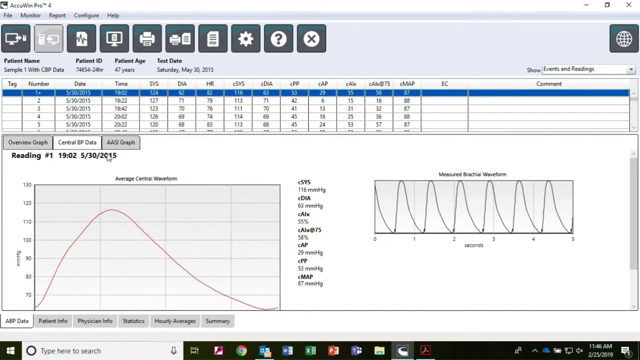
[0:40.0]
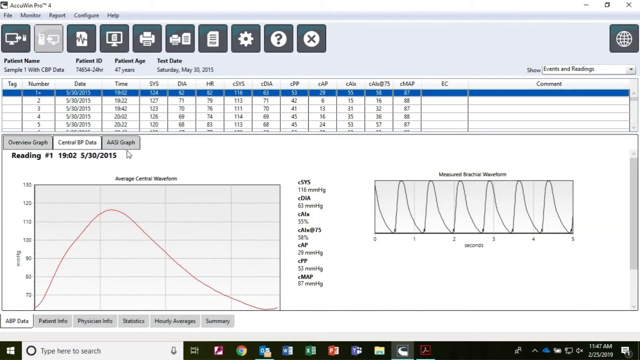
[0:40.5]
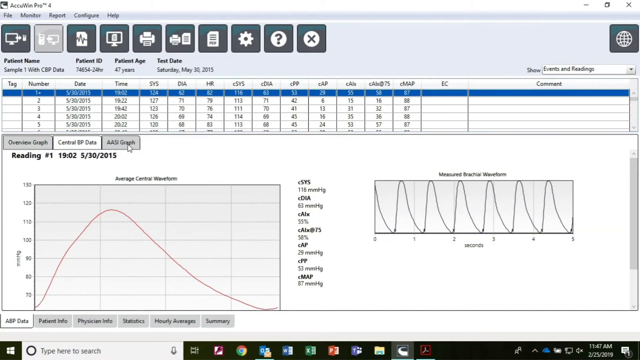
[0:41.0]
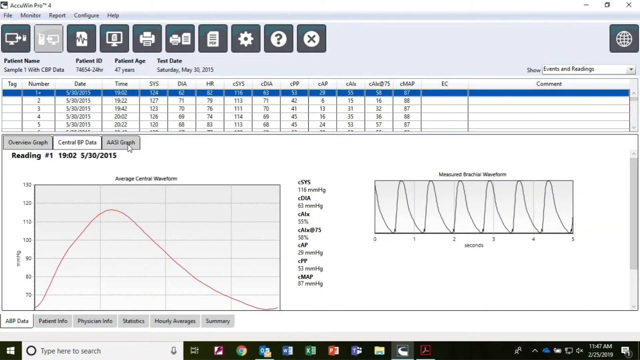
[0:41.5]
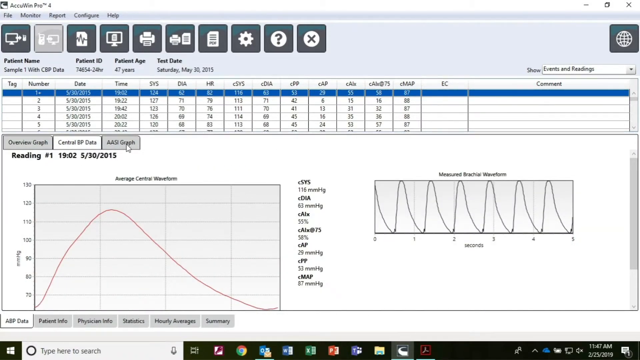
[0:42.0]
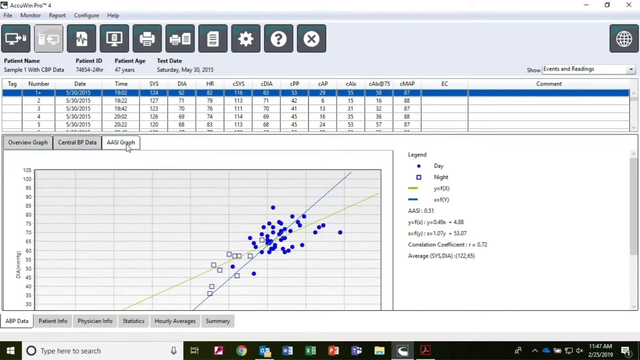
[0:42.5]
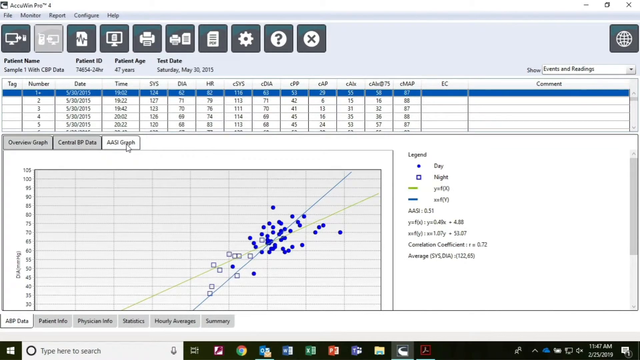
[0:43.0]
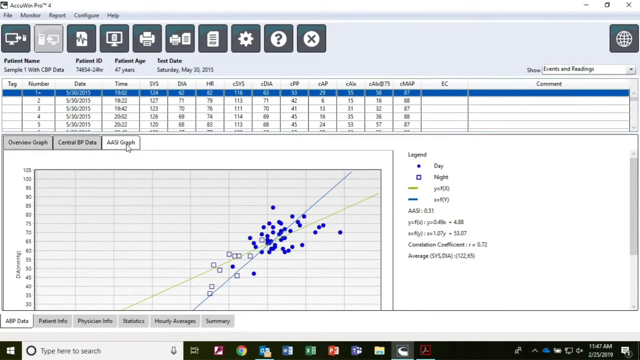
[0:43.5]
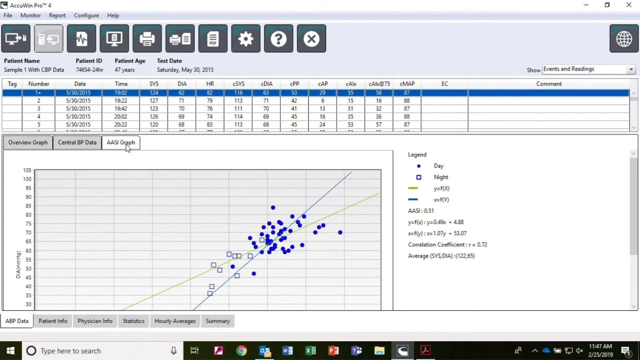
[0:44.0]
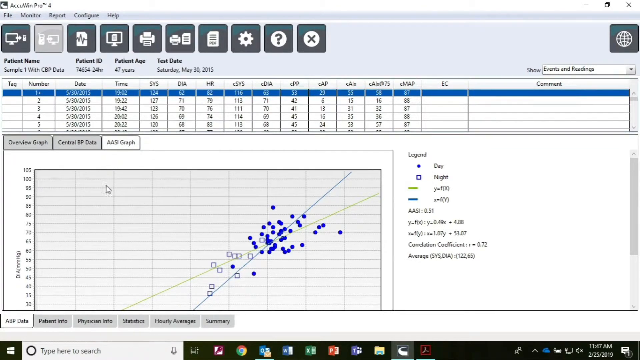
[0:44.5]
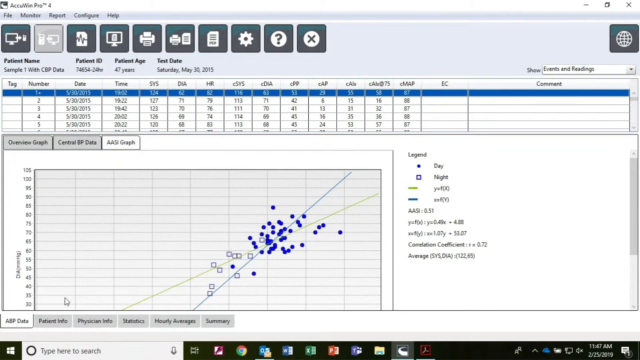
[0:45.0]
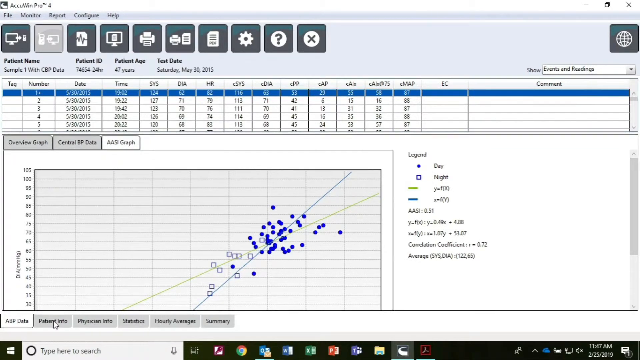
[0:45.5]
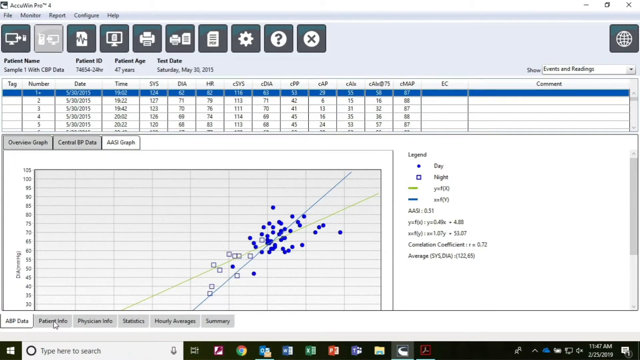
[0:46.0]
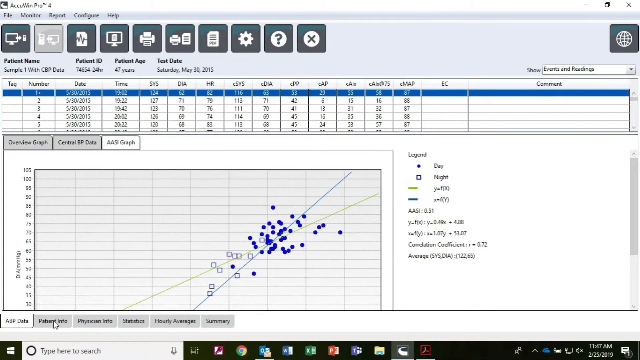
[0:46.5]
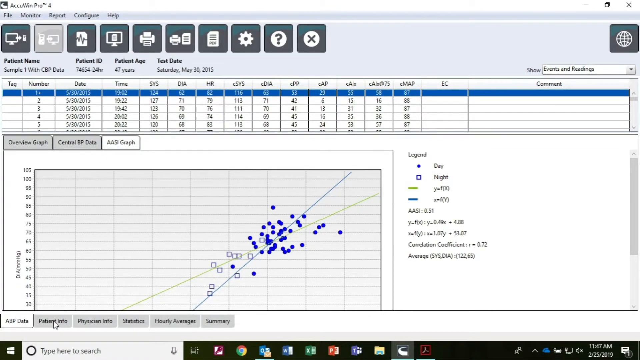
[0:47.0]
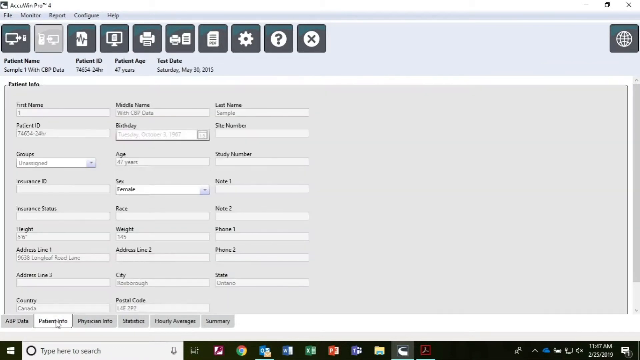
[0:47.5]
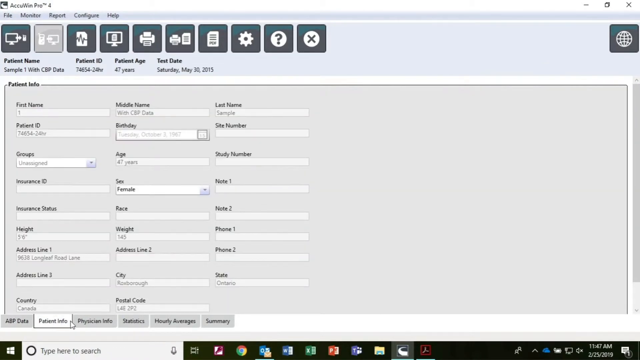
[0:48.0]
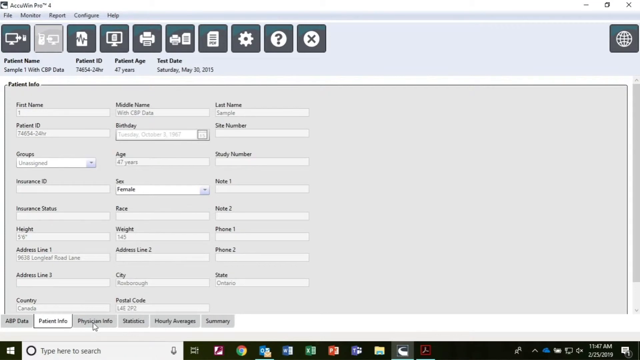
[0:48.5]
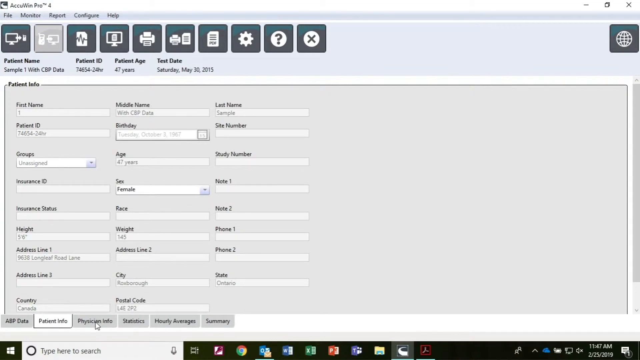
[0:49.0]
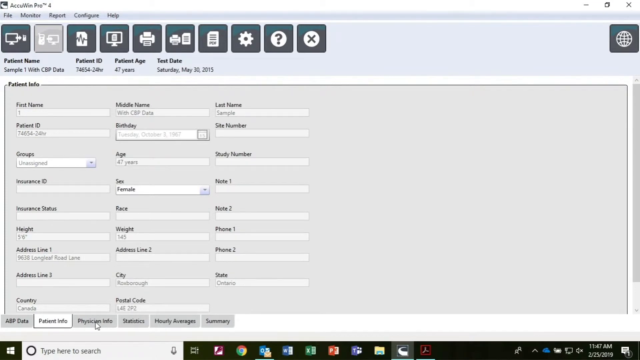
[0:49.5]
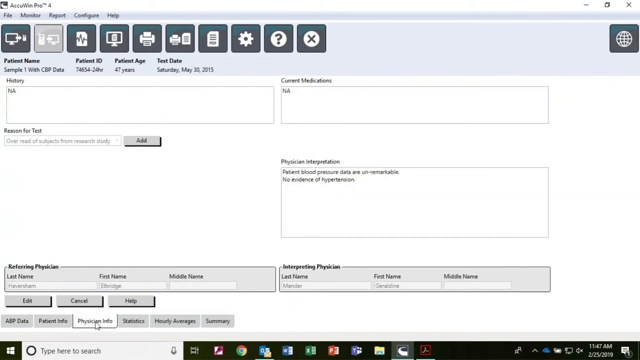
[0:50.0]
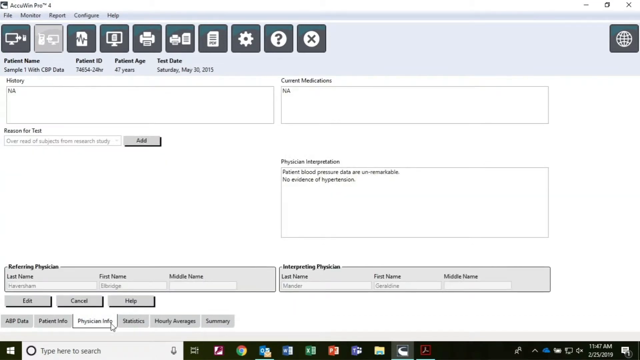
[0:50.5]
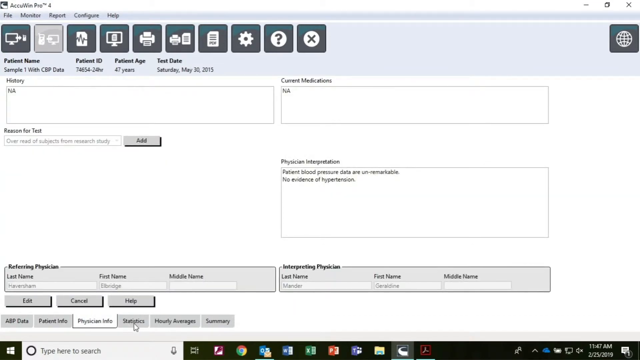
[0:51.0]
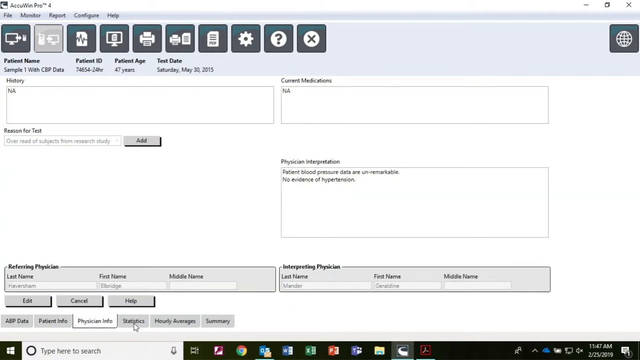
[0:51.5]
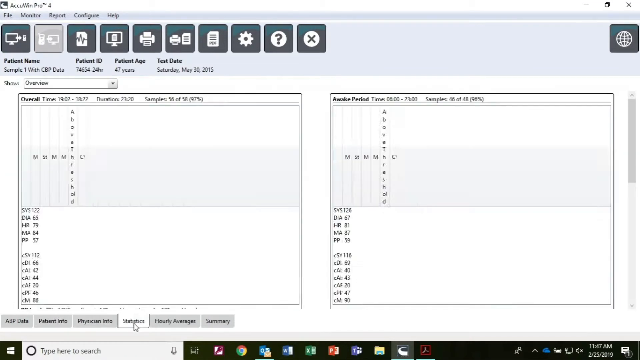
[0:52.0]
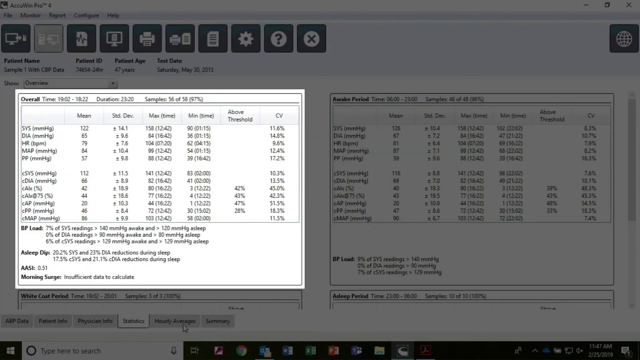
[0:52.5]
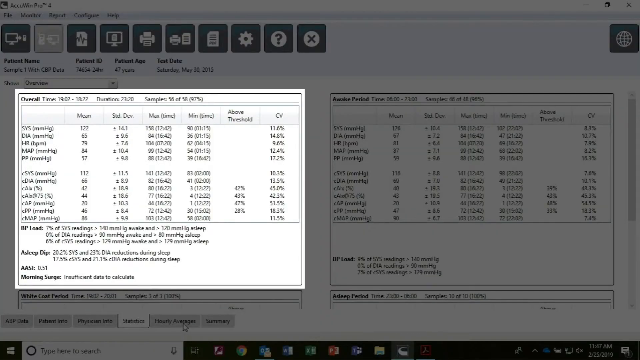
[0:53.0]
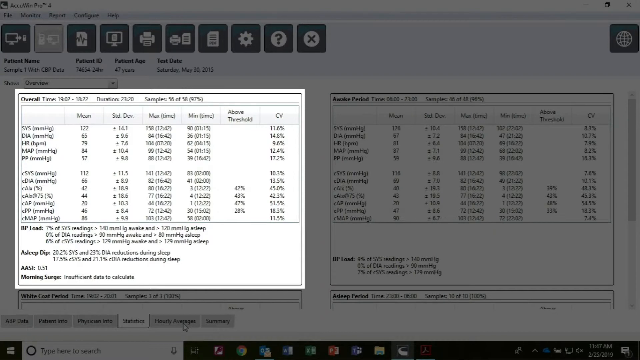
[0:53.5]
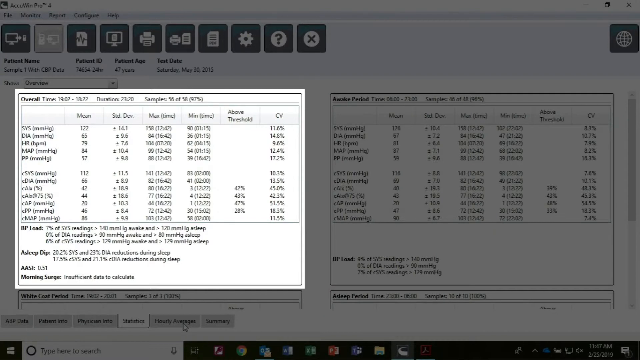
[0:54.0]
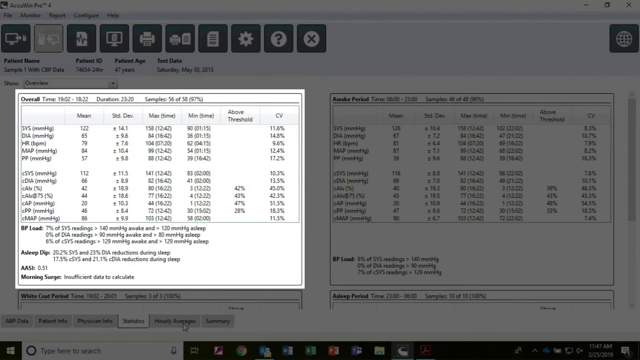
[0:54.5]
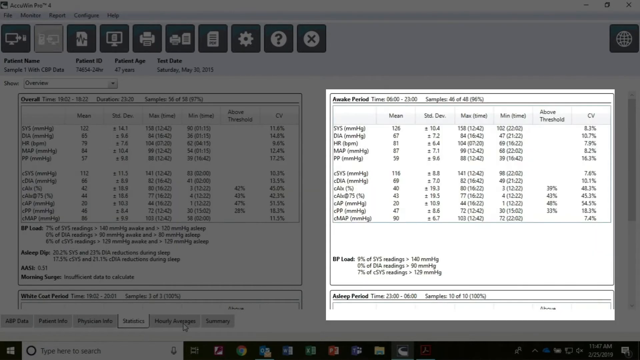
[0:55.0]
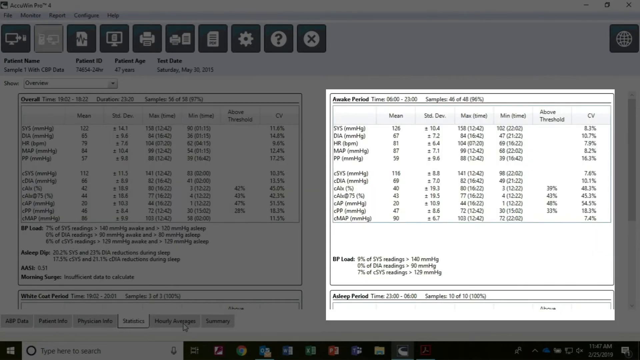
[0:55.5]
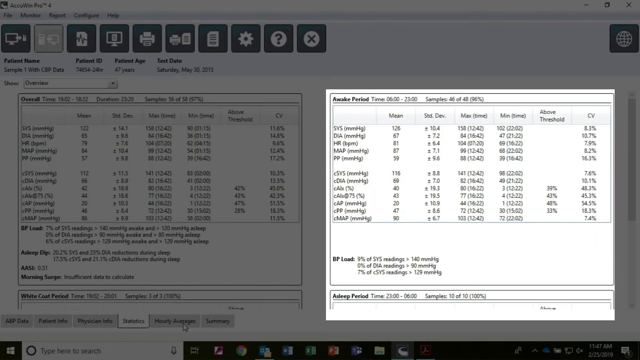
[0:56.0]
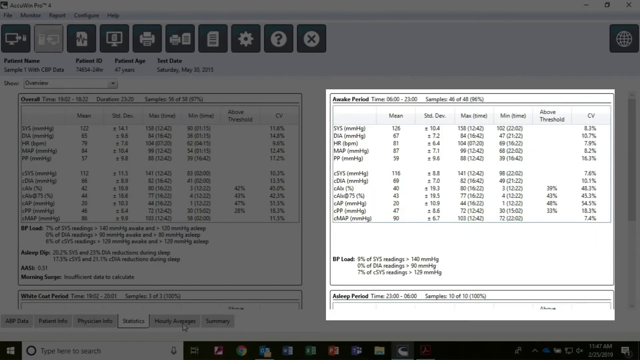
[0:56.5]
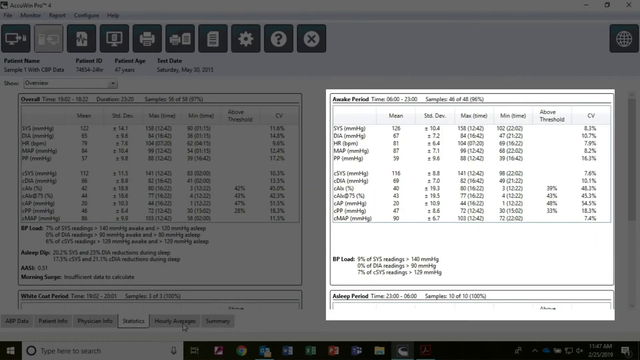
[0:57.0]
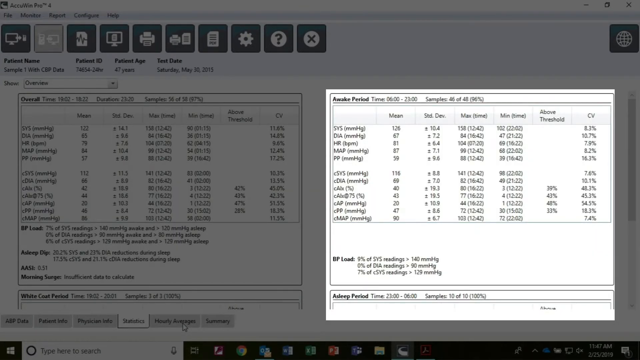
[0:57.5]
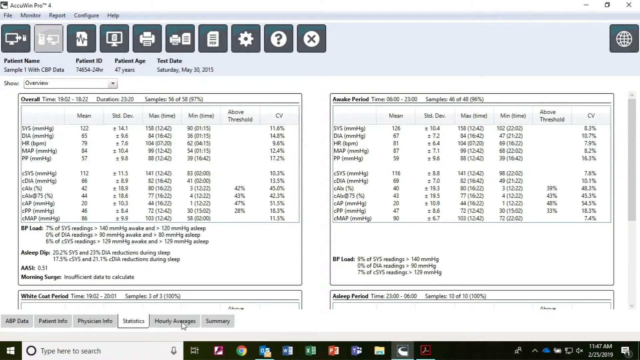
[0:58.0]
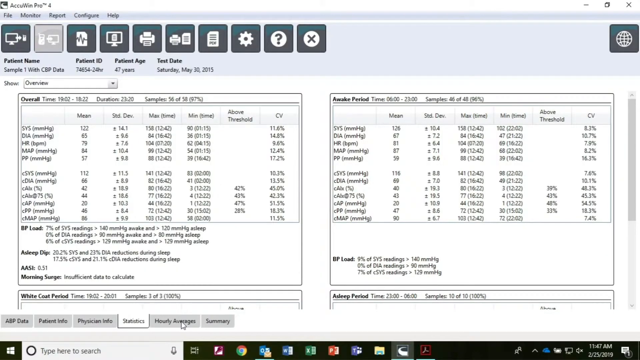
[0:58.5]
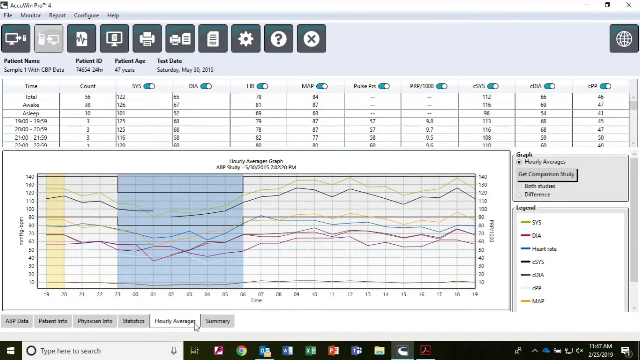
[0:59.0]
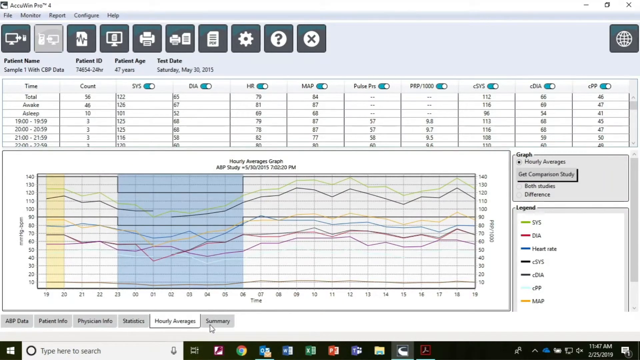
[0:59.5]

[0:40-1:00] The OcuWin Pro 4 app is open, showing control IIP data displayed as a wave. The user clicks on what looks like an AASI graph, which shows a bunch of dots, some blue and some gray, and two line intersections. He then clicks on patient information, which shows first name, middle name, last name, patient ID, group marked as unregistered, patient age, sex as female, height, weight, and address. He clicks a tab for physician information, but there is no information in it. He then clicks a tab called statistics, and a pop-up box appears with a bunch of information in two parts: an overall section and an available period section. Then another graph with more information appears.